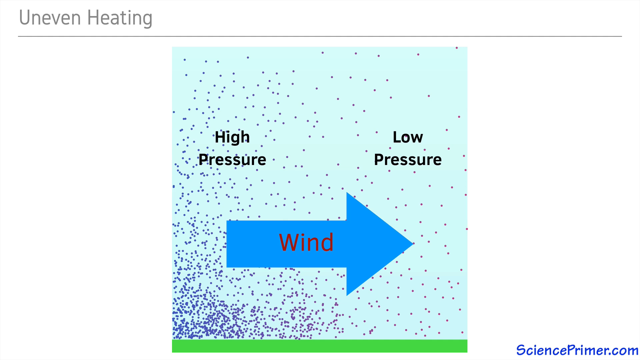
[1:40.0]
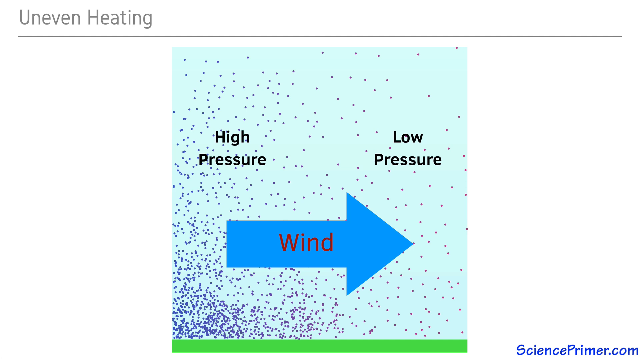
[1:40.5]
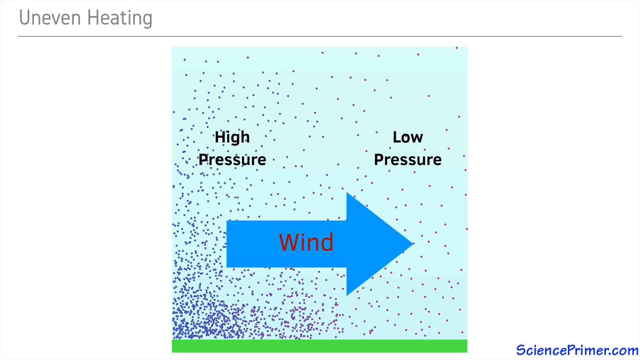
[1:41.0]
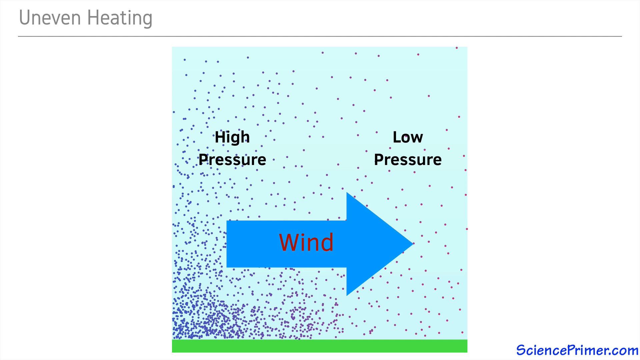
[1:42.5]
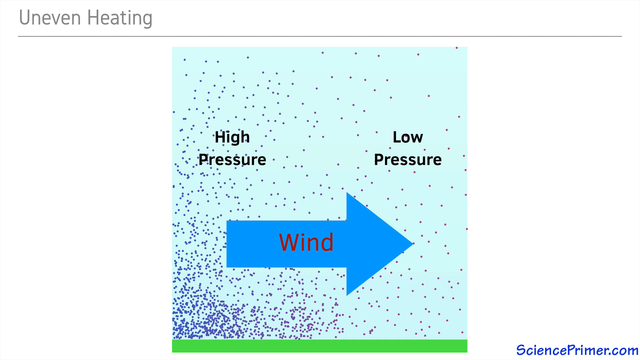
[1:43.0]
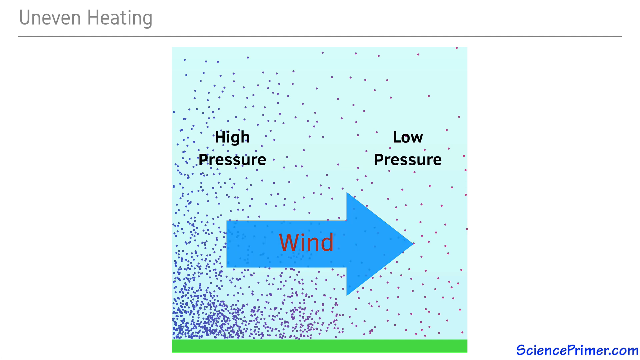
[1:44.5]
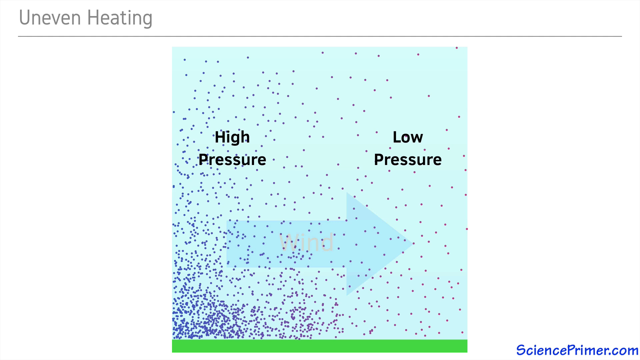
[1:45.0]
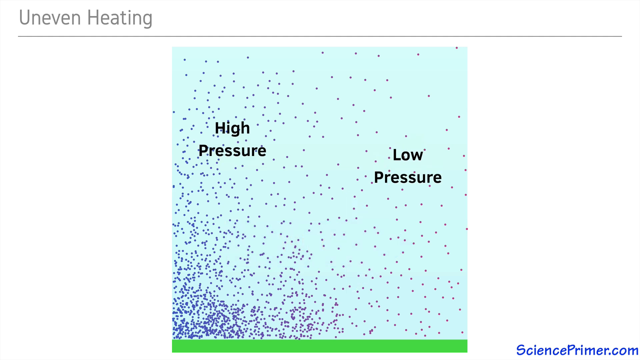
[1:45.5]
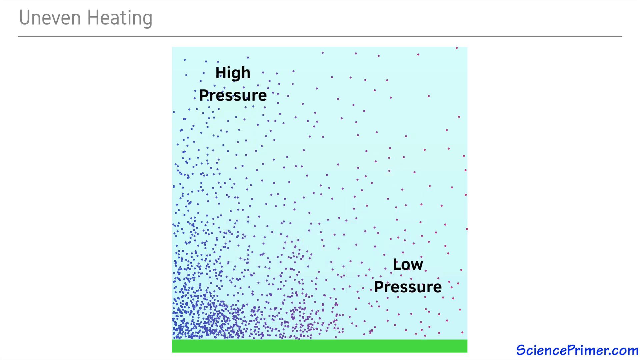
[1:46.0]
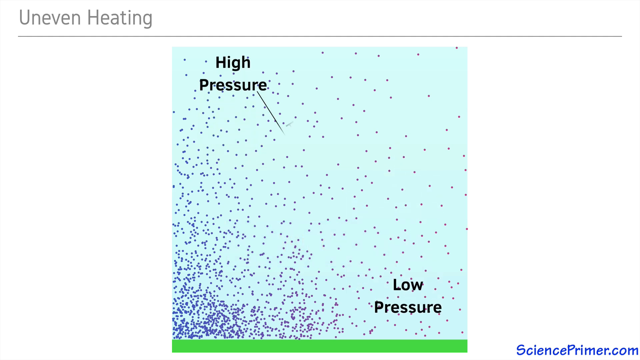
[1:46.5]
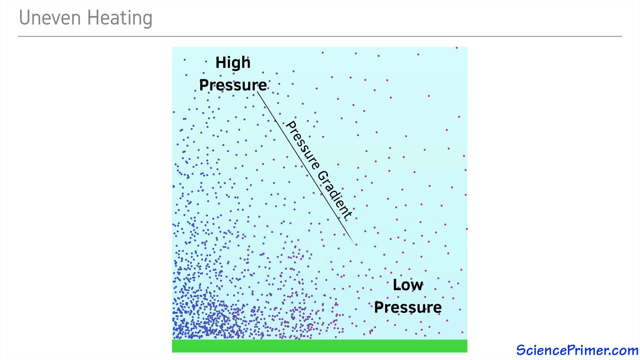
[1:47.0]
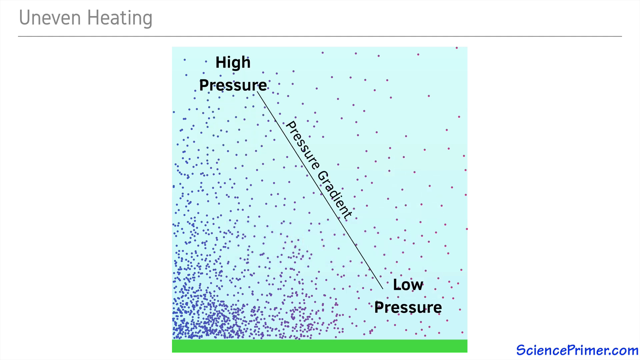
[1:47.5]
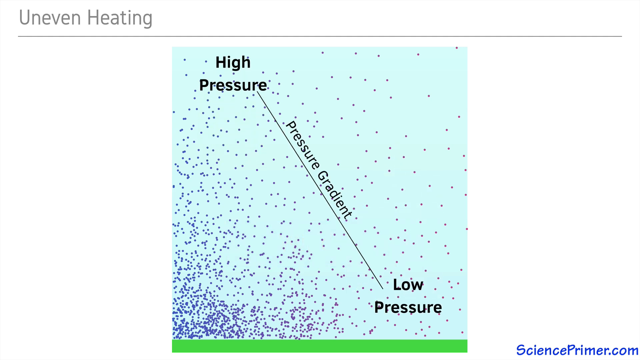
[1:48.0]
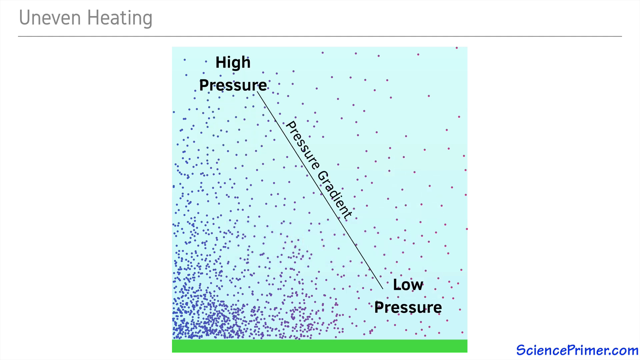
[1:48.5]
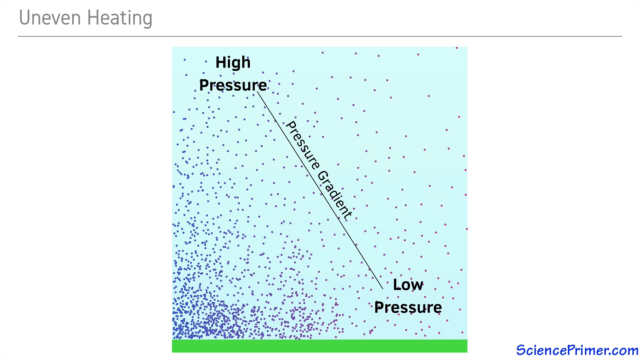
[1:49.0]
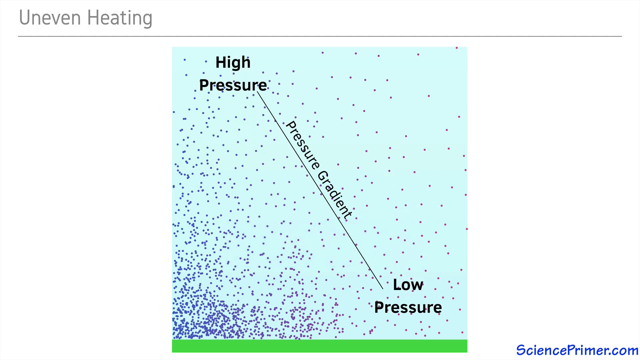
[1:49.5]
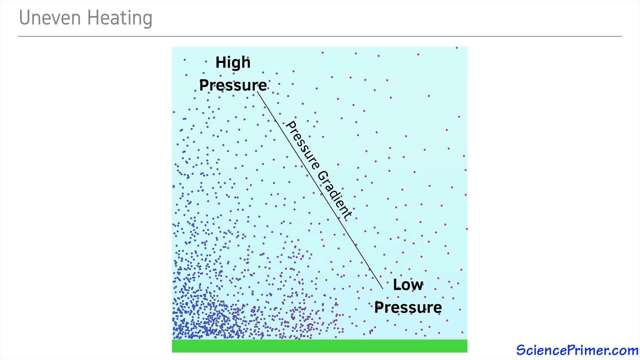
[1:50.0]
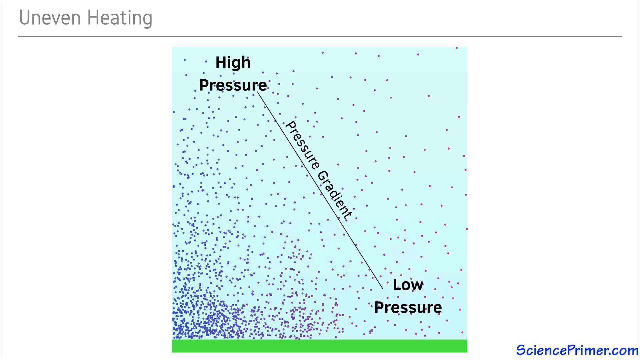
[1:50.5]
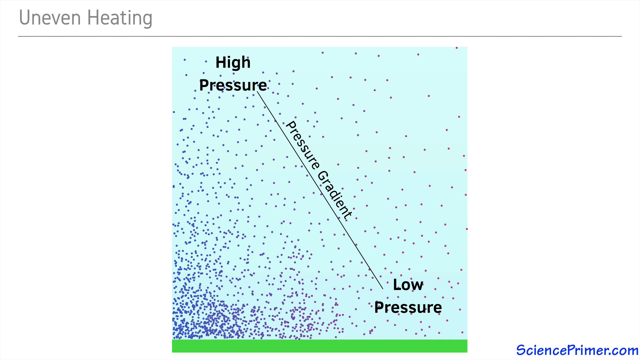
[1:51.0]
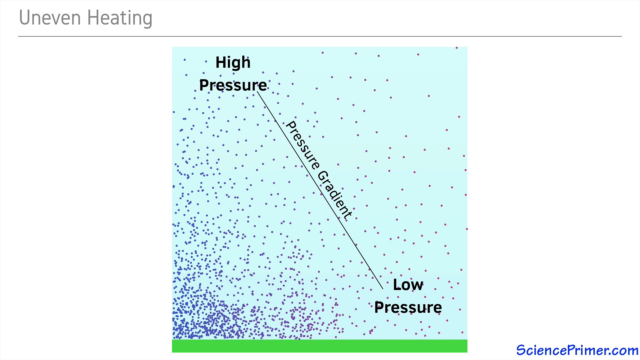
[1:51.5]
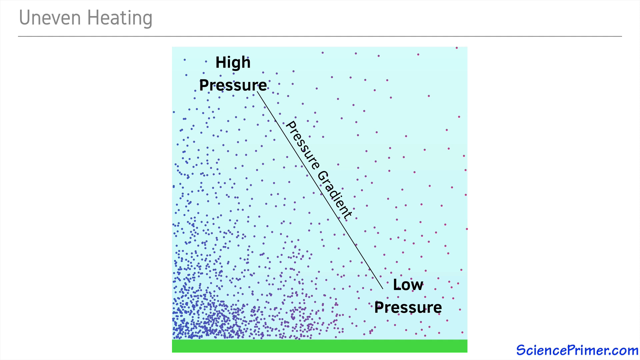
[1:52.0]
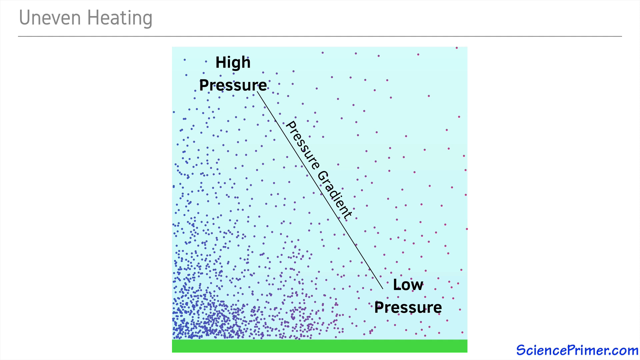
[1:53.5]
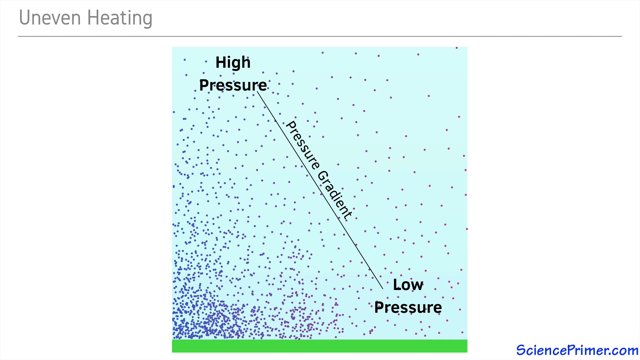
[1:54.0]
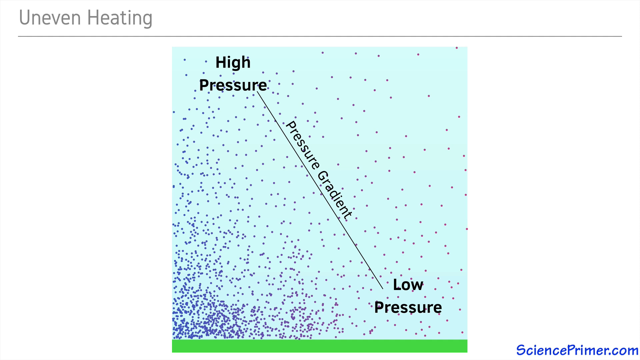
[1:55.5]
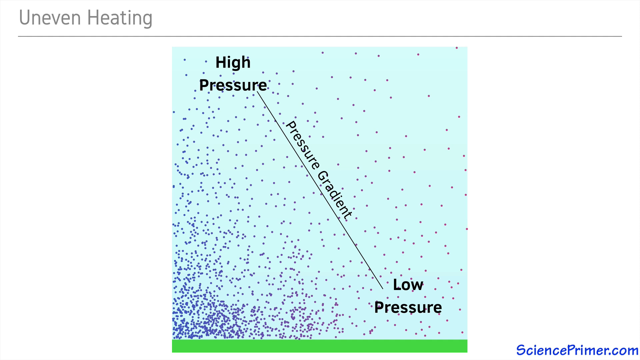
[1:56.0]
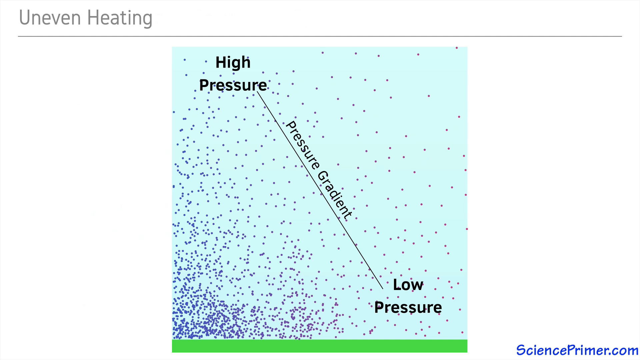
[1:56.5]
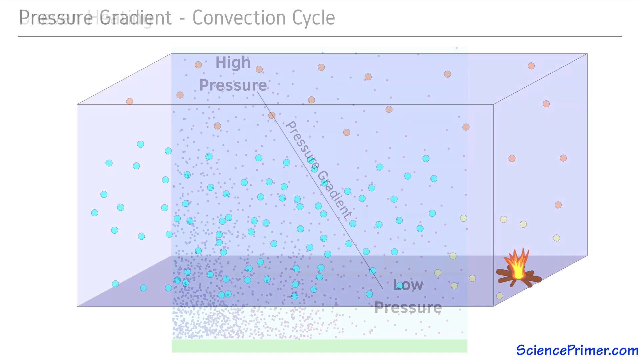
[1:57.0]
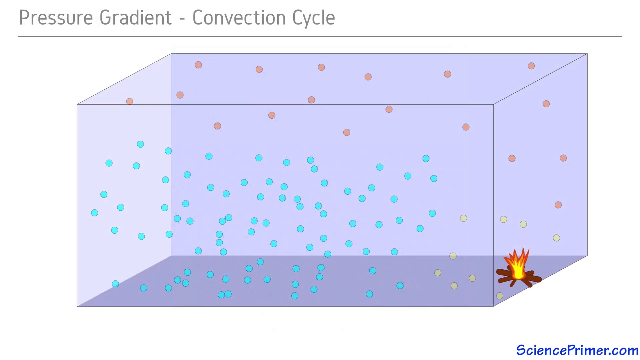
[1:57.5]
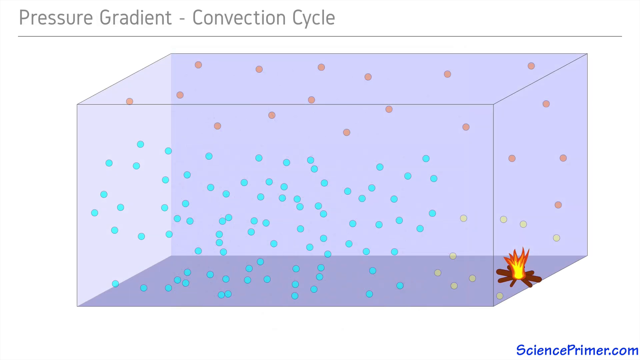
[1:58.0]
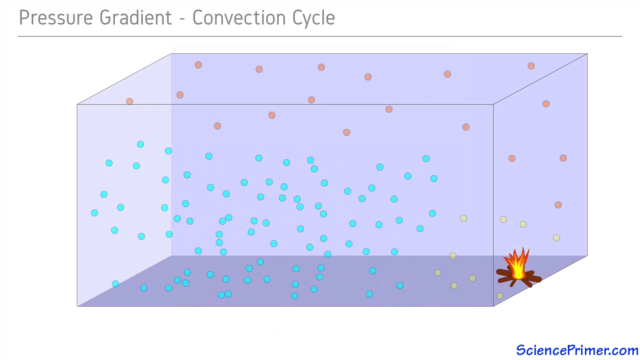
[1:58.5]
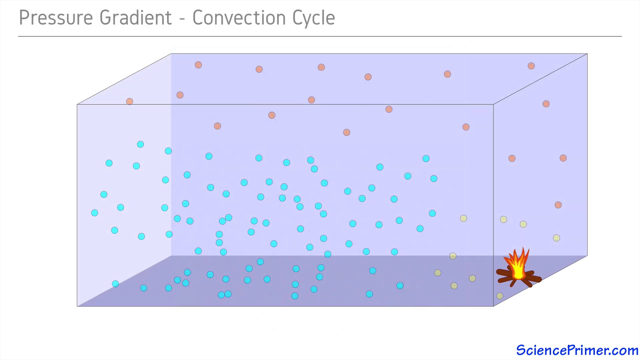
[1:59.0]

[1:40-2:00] The blue arrow in the middle pointing to the right, symbolizing the wind, disappears. The words "high pressure" move to the upper left area and "low pressure" moves down to the bottom right area, and in the middle a slanted line connects the high pressure and low pressure areas, with the words "pressure gradient" on top of the line. The scene then changes to a translucent light purple rectangle containing light blue dots and light red dots, with a campfire inside the rectangle in the bottom right corner. There are many more light blue dots than light red dots; the blue dots take up most of the middle and bottom areas, and the red dots are in the upper areas. The title in the top left corner has changed to "Pressure gradient convection cycle."